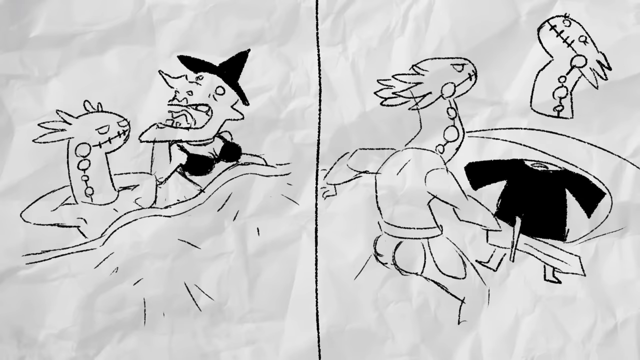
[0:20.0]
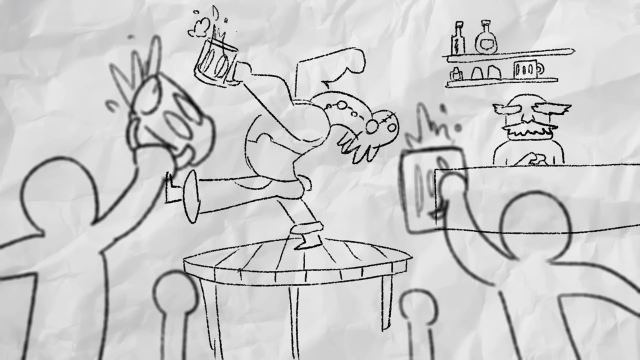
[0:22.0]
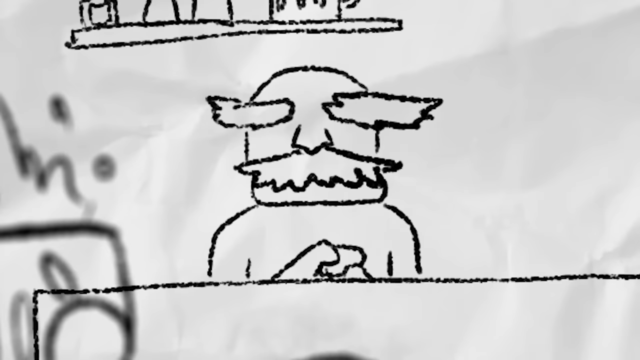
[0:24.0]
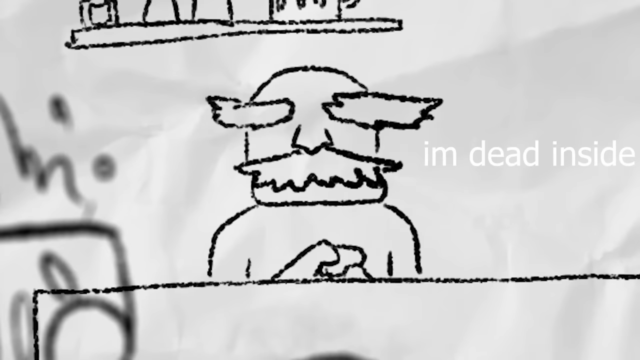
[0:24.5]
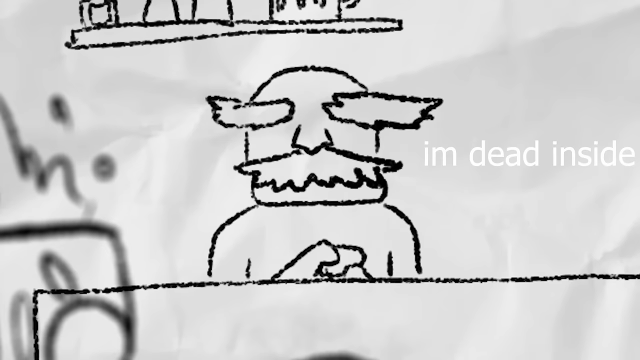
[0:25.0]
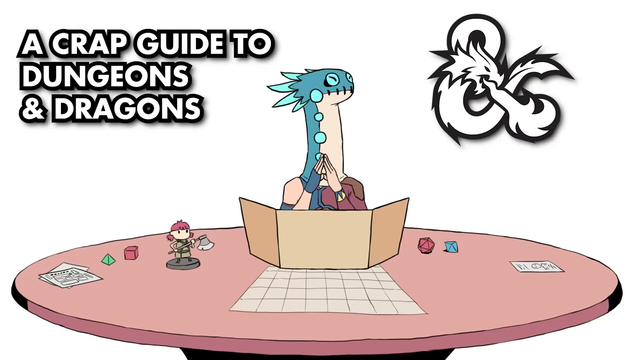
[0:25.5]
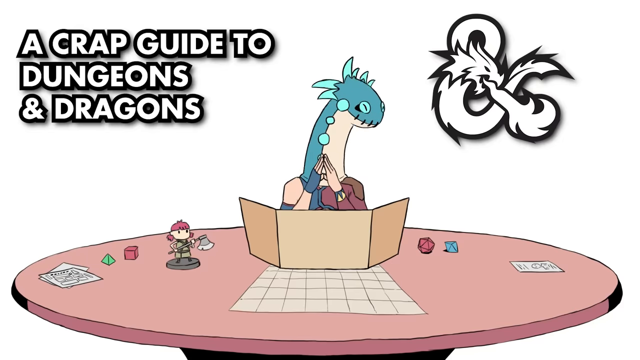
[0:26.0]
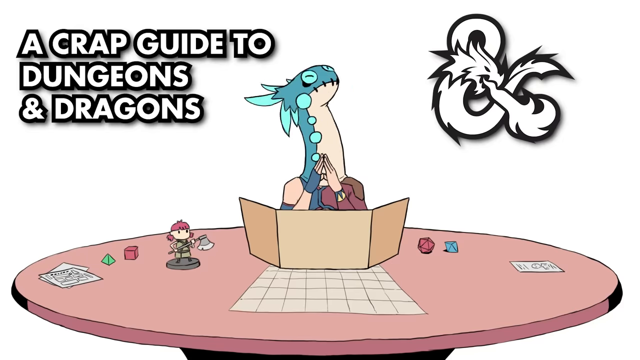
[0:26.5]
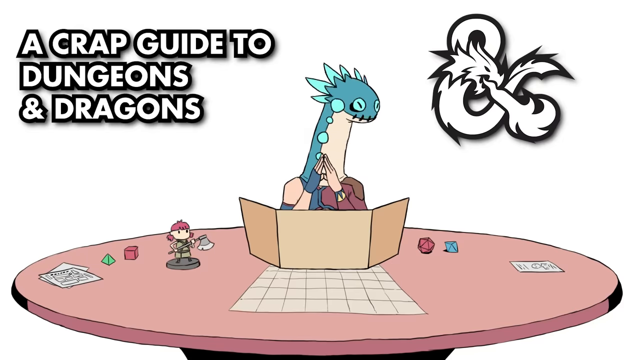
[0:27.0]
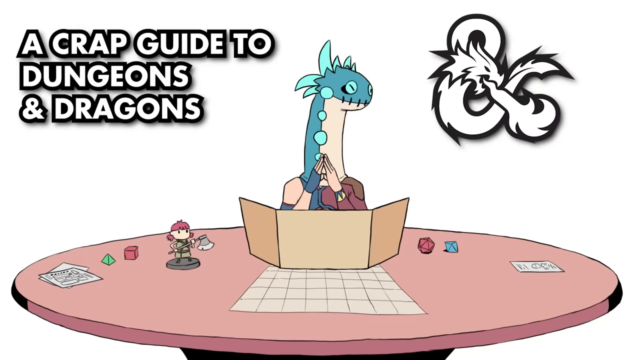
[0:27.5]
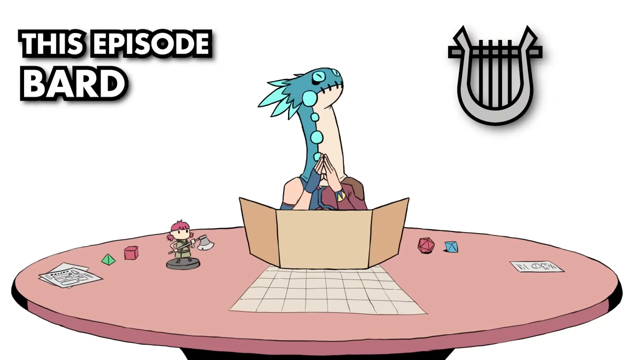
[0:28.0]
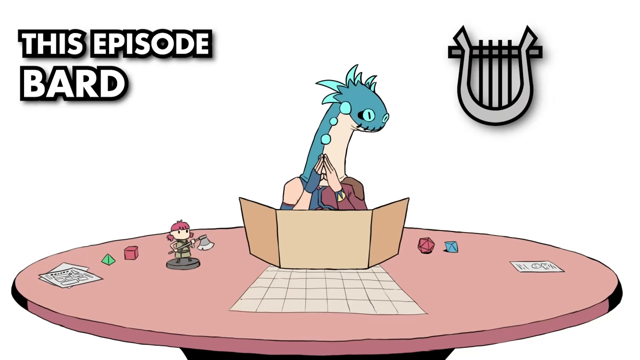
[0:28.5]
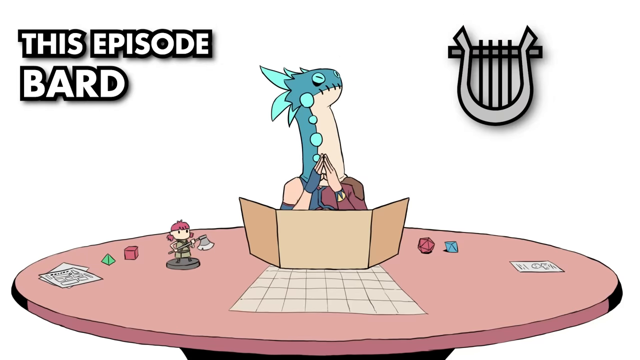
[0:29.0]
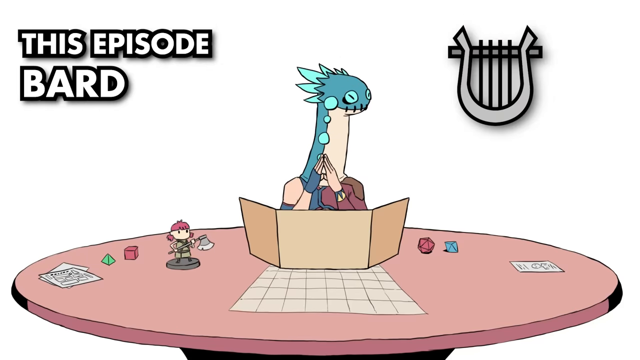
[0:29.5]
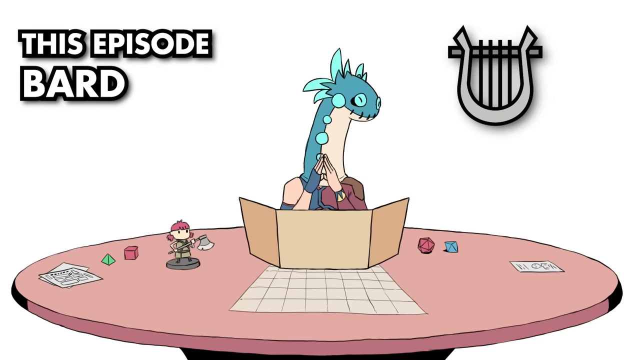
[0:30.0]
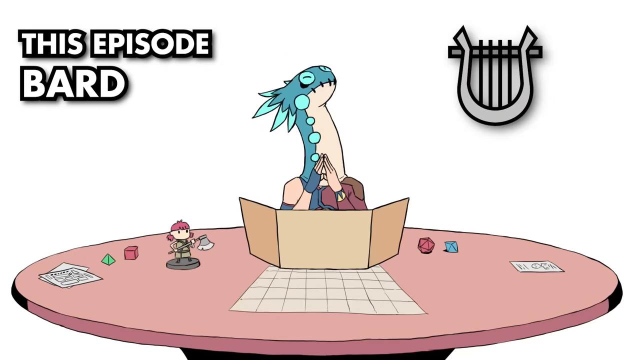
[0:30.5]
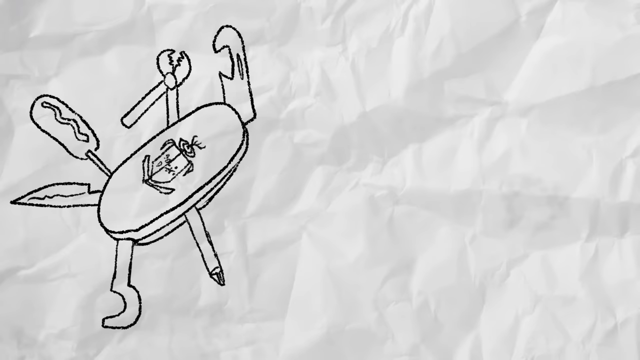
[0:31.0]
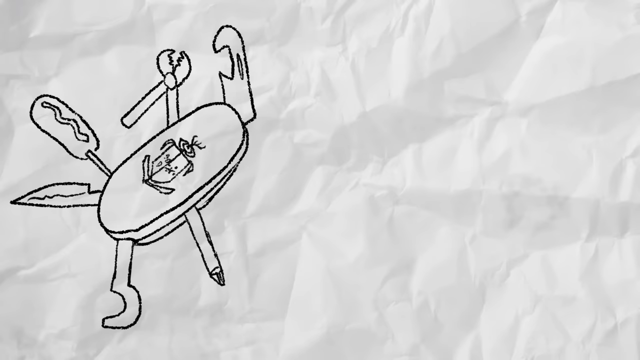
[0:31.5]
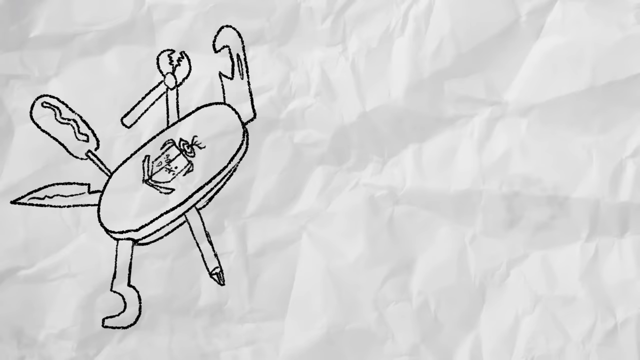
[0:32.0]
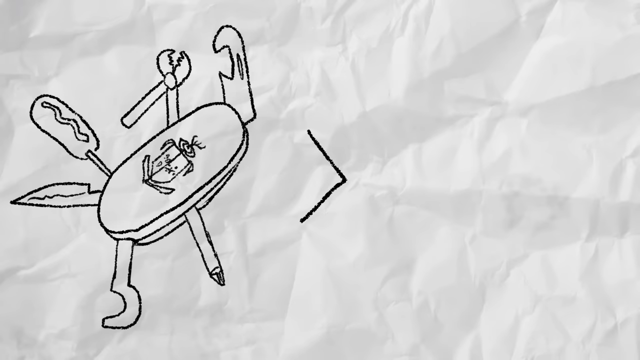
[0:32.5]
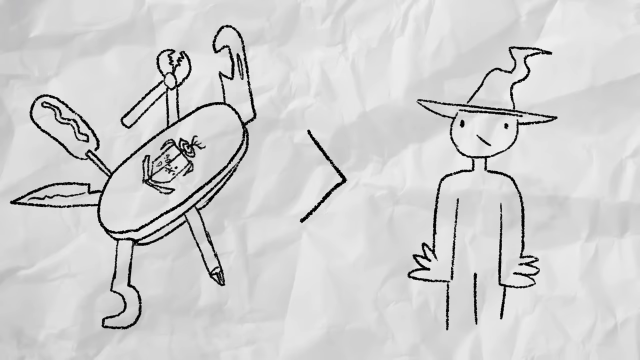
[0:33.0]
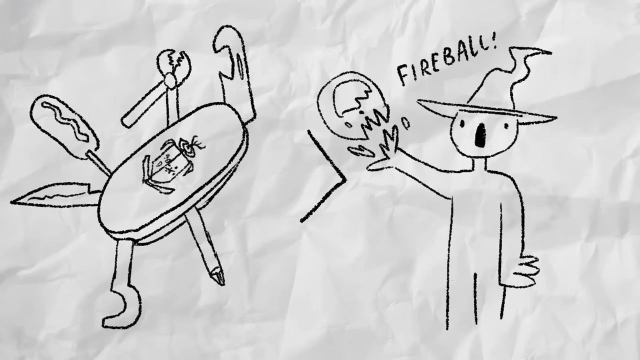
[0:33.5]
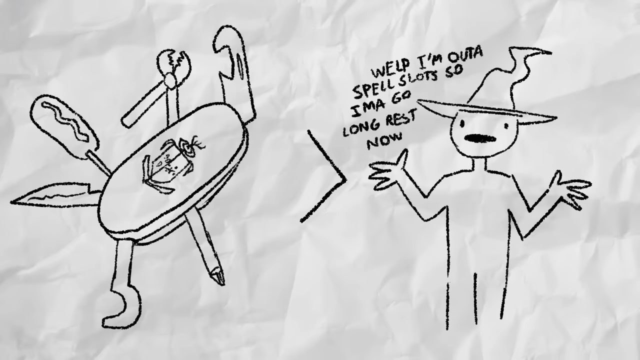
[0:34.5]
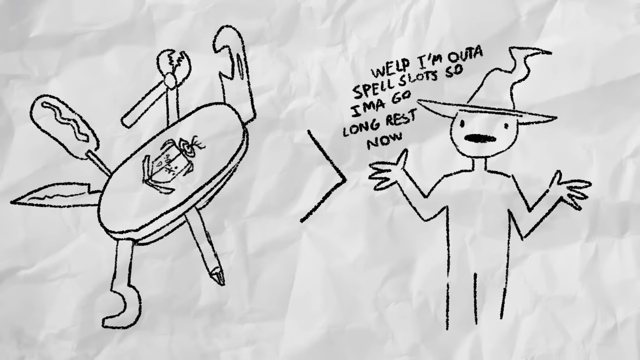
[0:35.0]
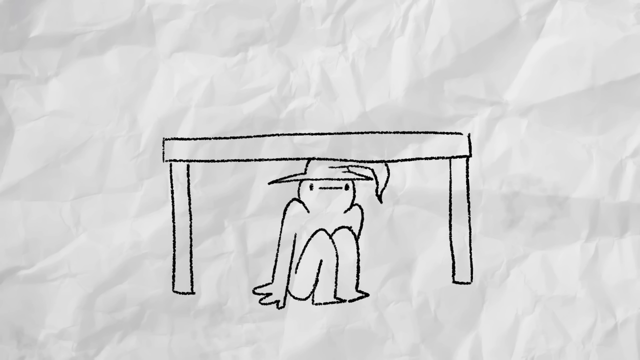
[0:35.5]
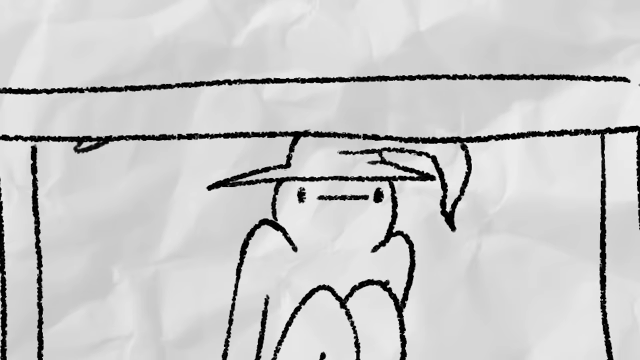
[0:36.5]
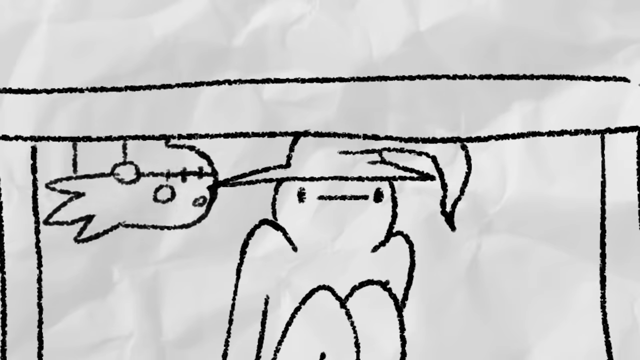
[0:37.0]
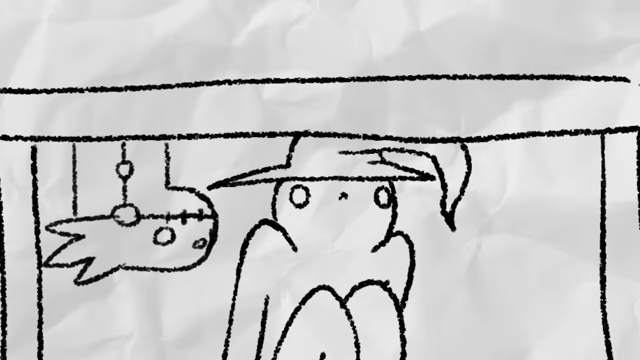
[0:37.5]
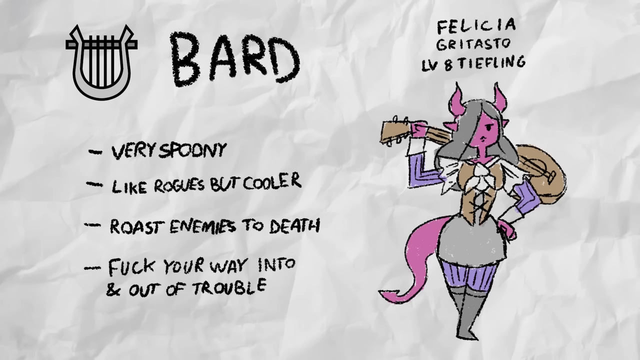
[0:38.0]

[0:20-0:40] A drawn iguana person lies in bed with a witch wearing a black witch's hat and a black bra, the covers up to their waist; this drawing is on the left, with a drawn line down the middle. On the right, the iguana holds a sword and is chopping at the neck of a female iguana in a black shirt. The background is white and looks like crumpled paper. In the next scene, the drawn iguana person stands on a wooden table in the middle of a bar, holding a beer in the air, while other drawn figures around the table also hold beers up. In the background on the right, an old man with bushy eyebrows and a bushy mustache stands behind the bar, with shelves of alcohol behind him. A close-up then shows the old man's face: thick bushy eyebrows, mustache, and a bald head. White text pops up in front of him reading "im dead inside". The screen transitions to a more animated style. White and black text in the upper left corner reads "a crap guide to Dungeons and Dragons", and a white and black Dungeons and Dragons logo is on the right. In the middle, the iguana person, now in color, has his hands pointed together almost as if praying, with an unfolded brown portfolio in front of him. He sits at a pink round table with dice, a figurine, graphing paper and some cards on it. The iguana nods his head back and forth for several seconds before the text in the upper right corner changes to "This episode Bard" in the same black and white graphic, with a gray logo on the right that looks like a mix of a harp and a gate.